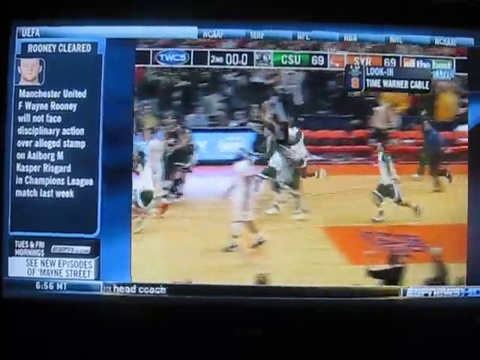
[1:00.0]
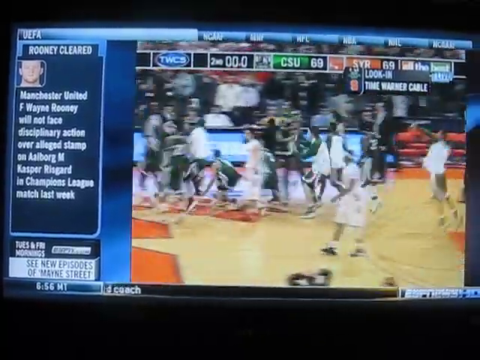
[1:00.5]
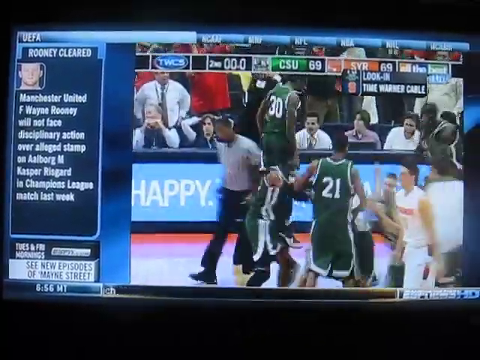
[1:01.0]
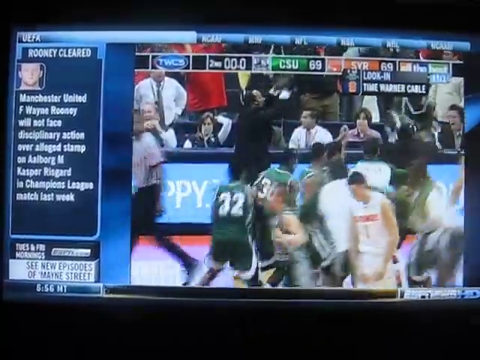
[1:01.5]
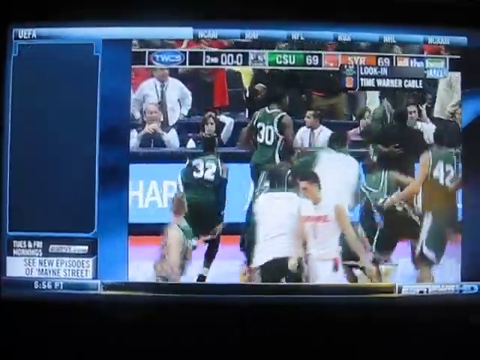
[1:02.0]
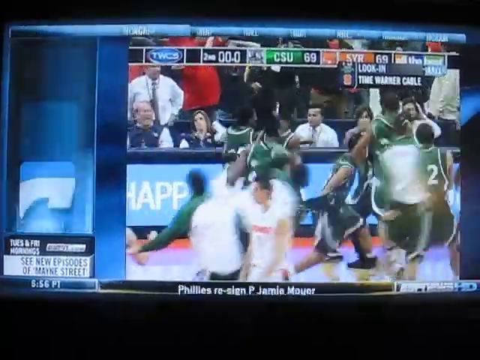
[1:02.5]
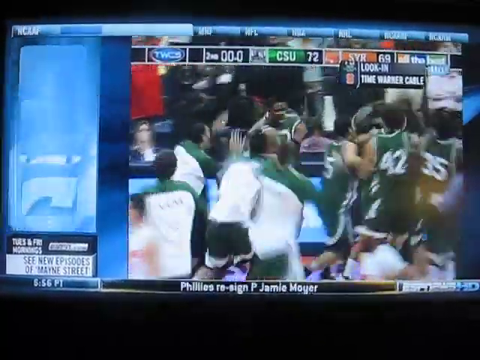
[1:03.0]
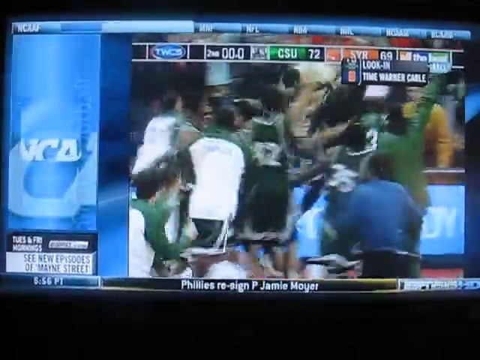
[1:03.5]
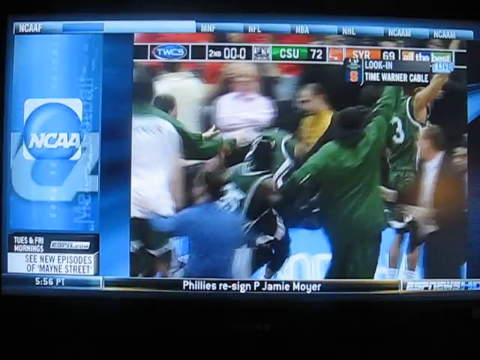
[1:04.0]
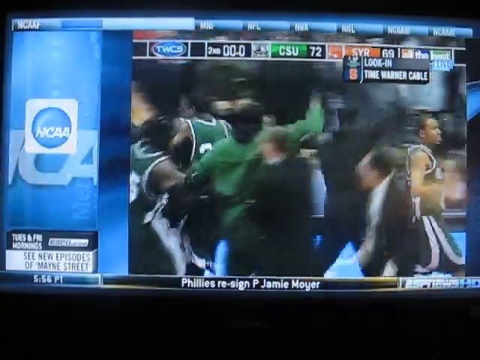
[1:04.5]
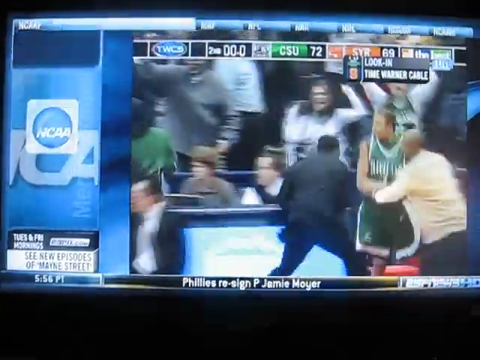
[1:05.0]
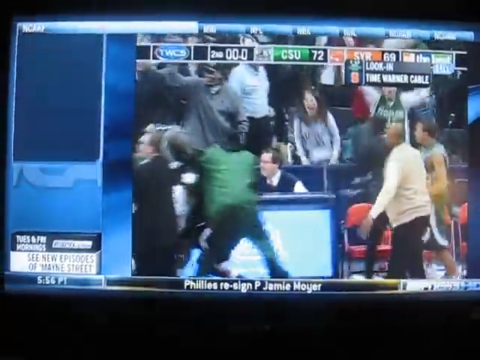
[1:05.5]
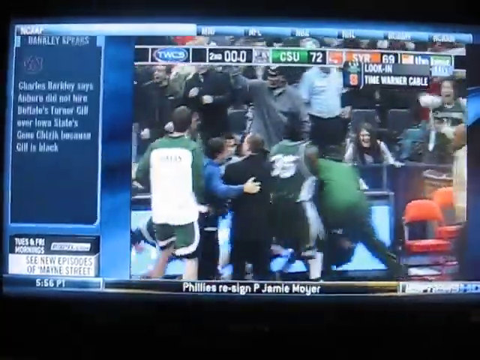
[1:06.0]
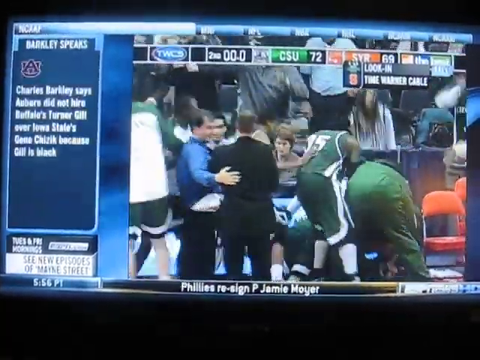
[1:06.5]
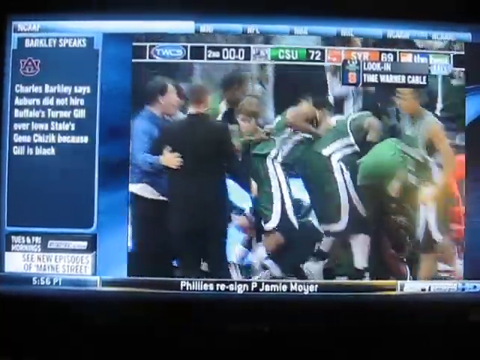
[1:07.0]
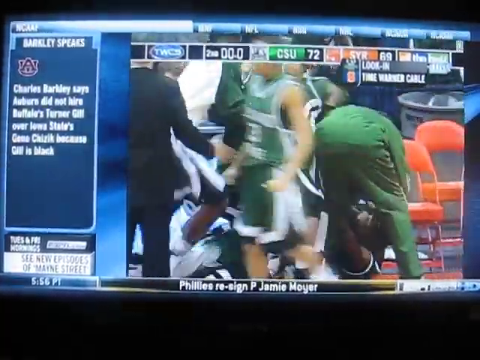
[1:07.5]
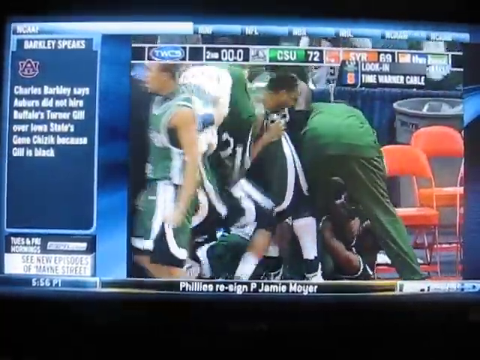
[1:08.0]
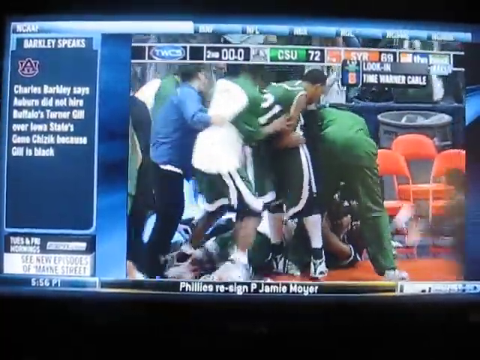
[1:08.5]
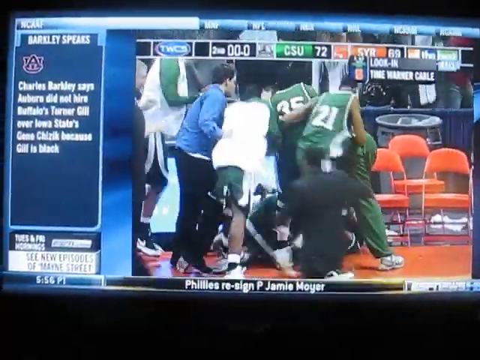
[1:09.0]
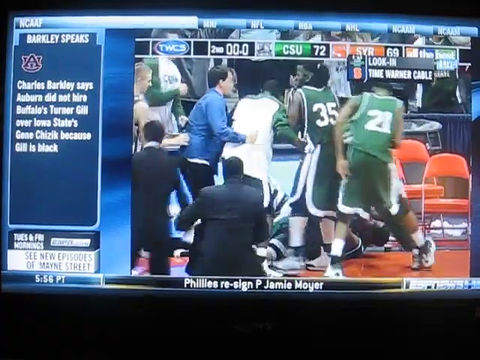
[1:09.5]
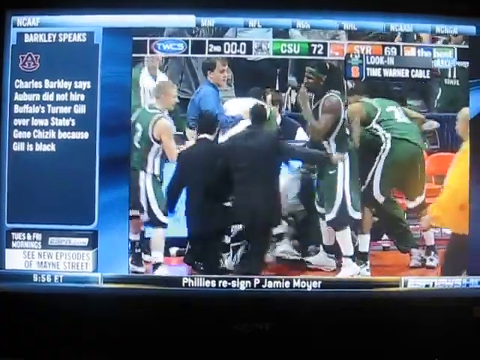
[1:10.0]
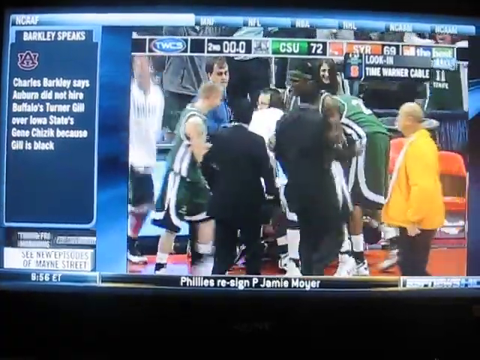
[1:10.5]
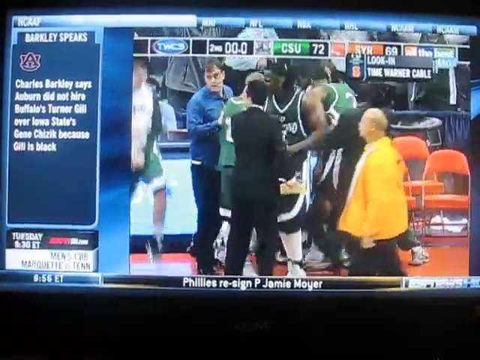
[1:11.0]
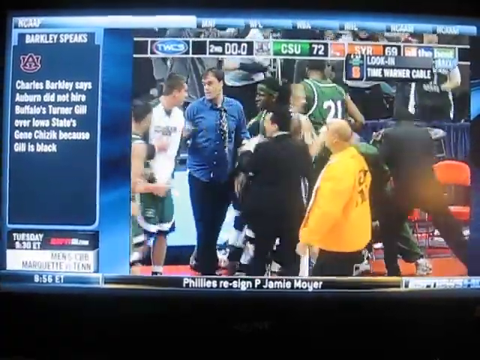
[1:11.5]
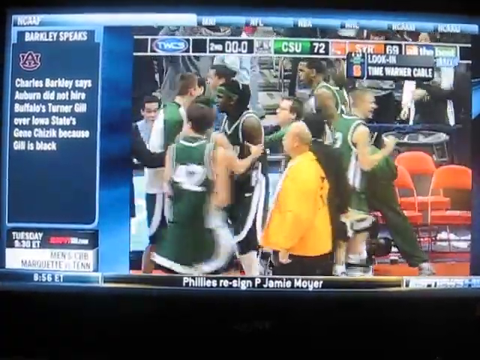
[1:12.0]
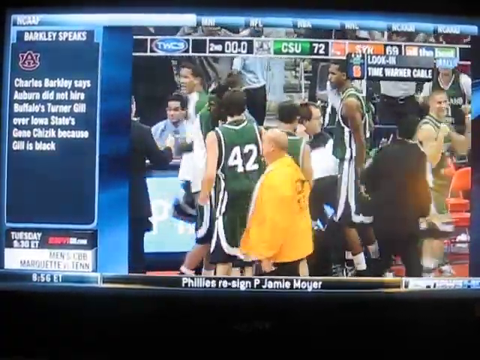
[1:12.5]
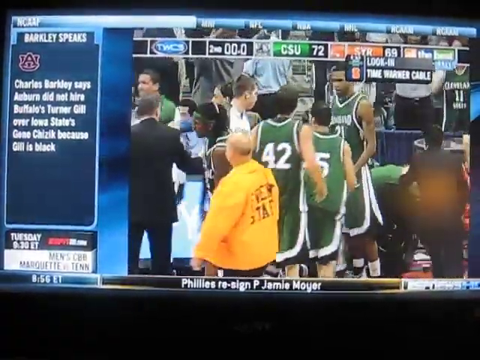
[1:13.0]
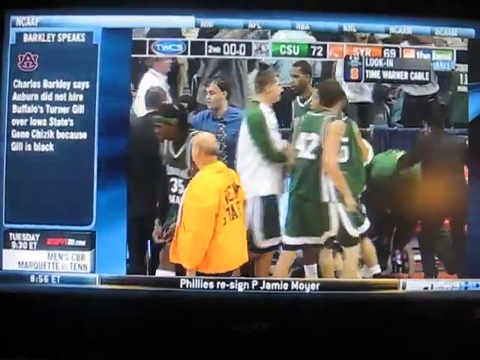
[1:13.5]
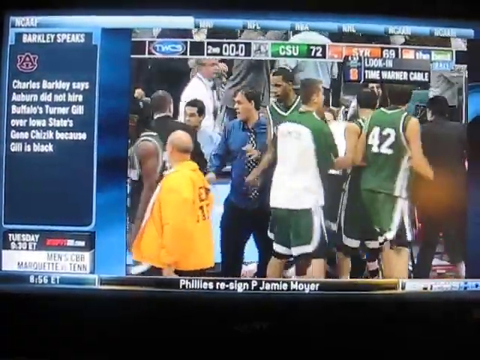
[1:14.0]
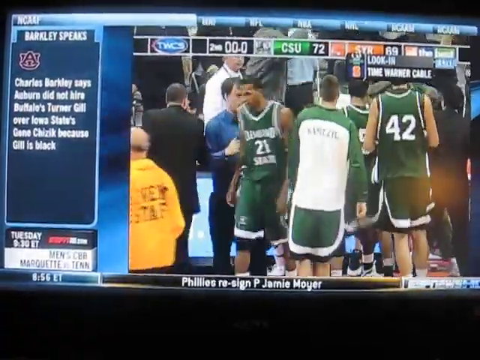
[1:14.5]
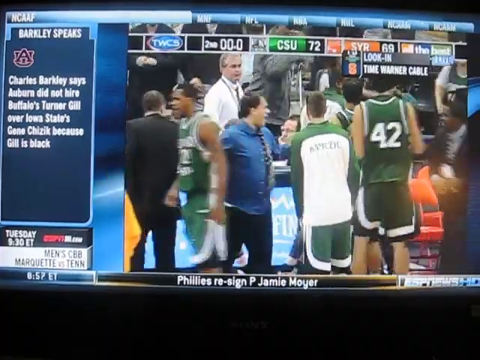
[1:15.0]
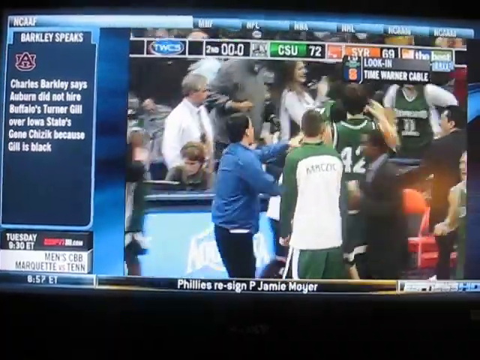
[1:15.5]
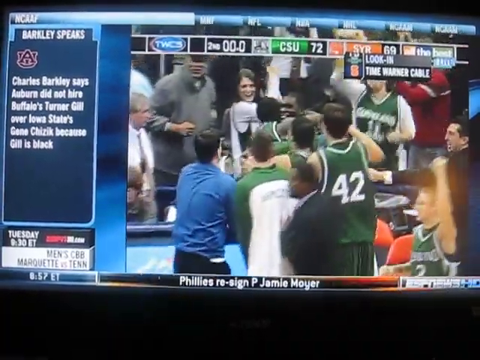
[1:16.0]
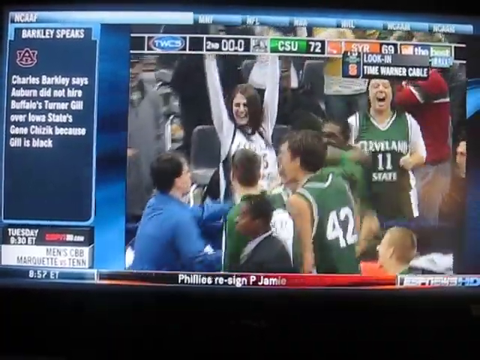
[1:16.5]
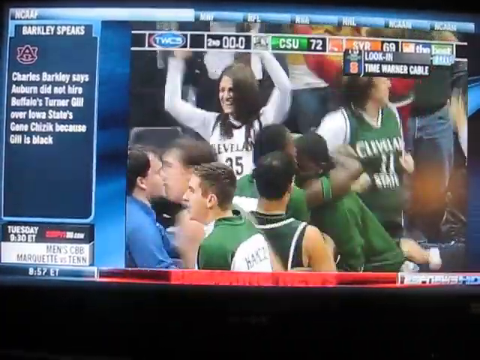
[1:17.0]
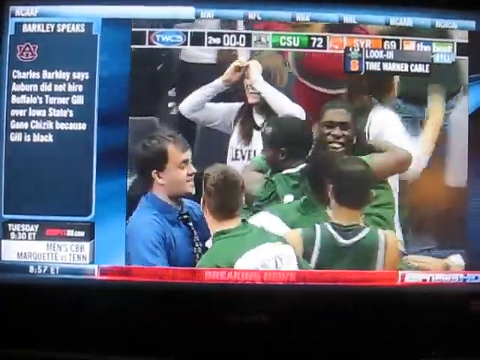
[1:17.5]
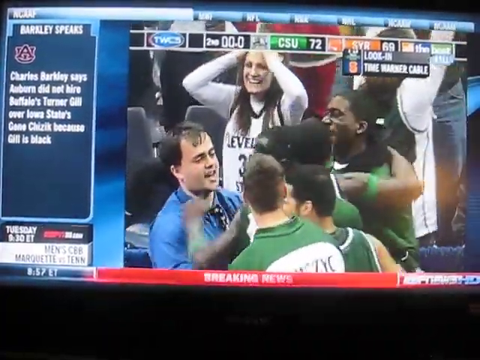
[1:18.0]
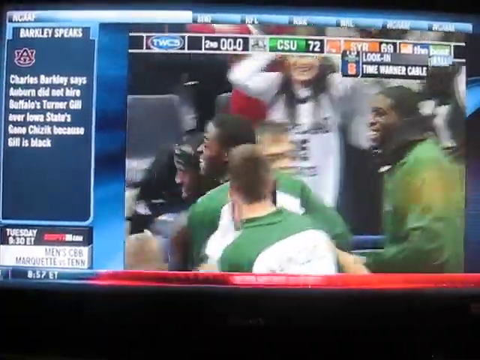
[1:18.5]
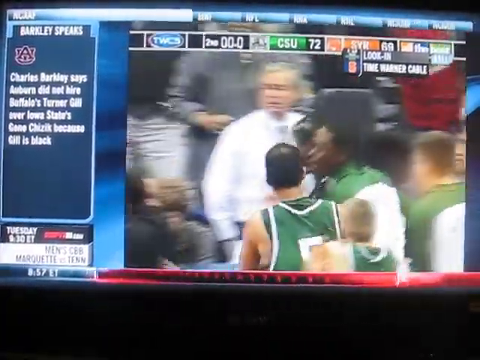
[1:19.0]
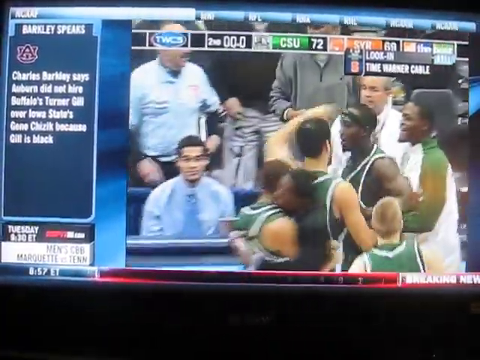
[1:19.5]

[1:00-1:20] The score shows the end of the second quarter with CSU at 69 and Syracuse at 69. The ESPN News sidebar reads "Rooney cleared Manchester United Wayne Rooney will not face disciplinary action over alleged stamp". Players run toward the left side of the court, where some trainers also are. The shot switches to players in green jerseys jumping up and down and then running toward the right side of the court. A man in a green sweatsuit jumps up with his arm in the air in victory. In the stands, a young woman with dark hair and a white jacket jumps, yells and pounds on the barrier, other people jump and raise their arms in victory, and a woman wearing a green jersey jumps up and down and turns around in a circle.